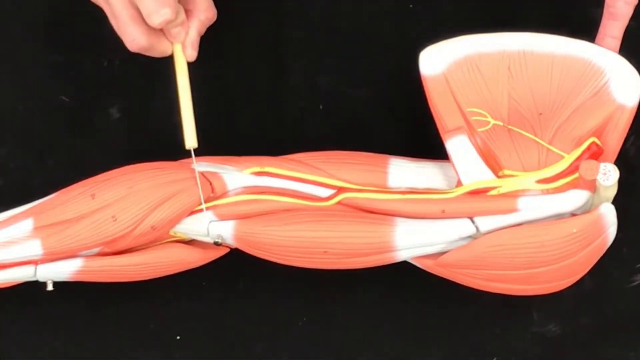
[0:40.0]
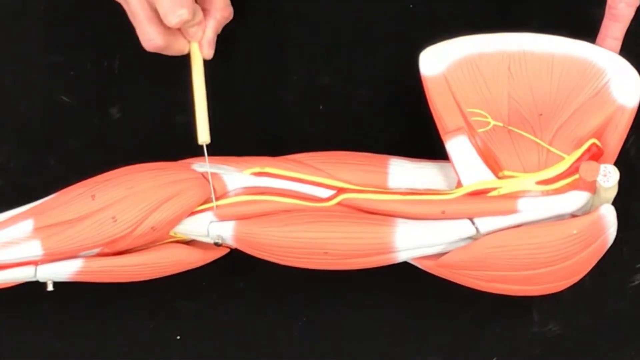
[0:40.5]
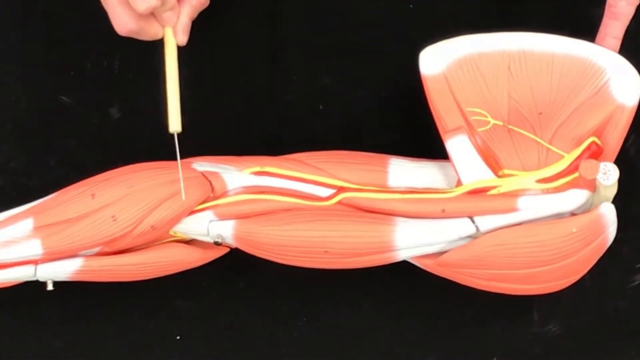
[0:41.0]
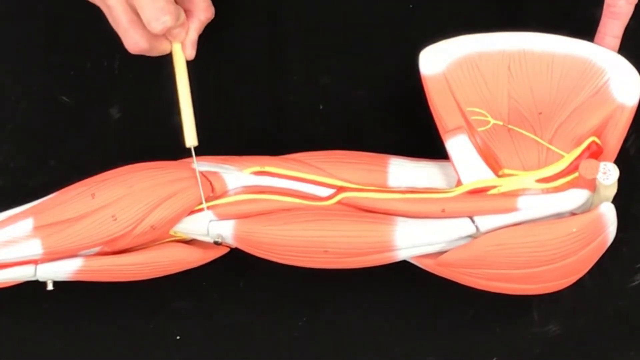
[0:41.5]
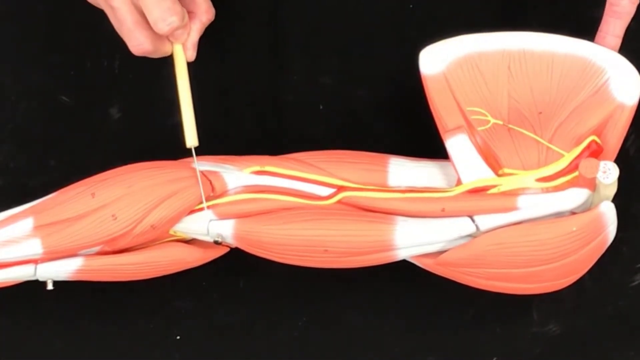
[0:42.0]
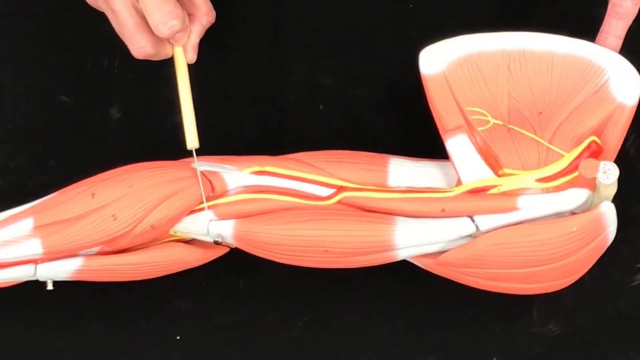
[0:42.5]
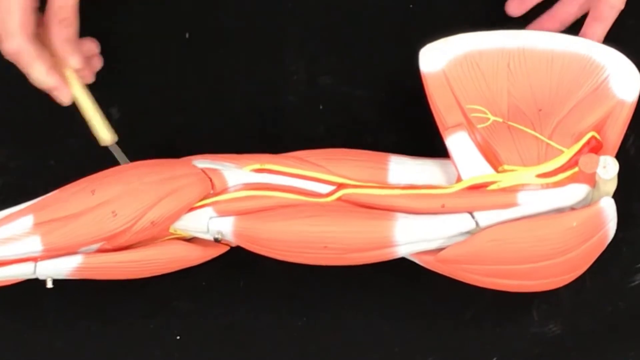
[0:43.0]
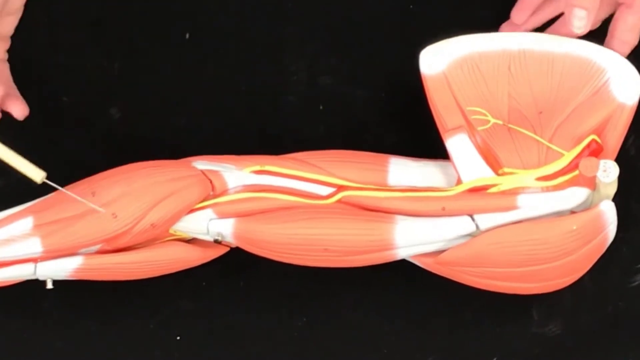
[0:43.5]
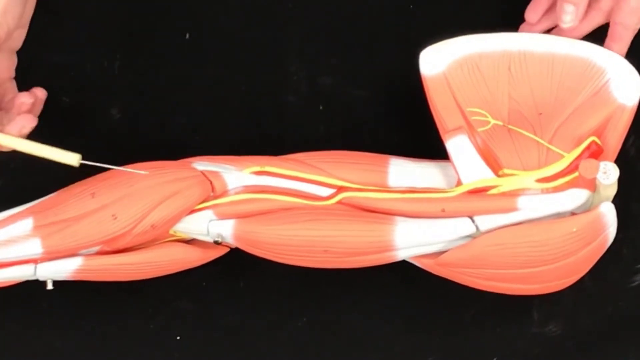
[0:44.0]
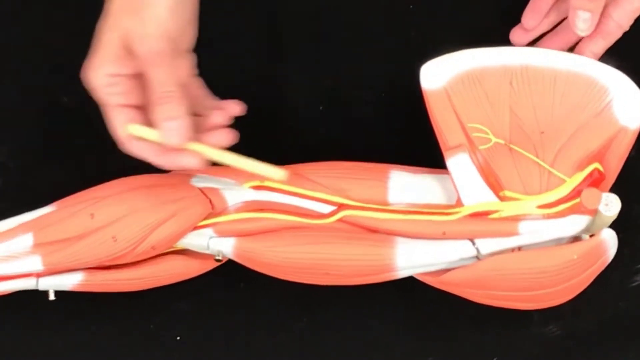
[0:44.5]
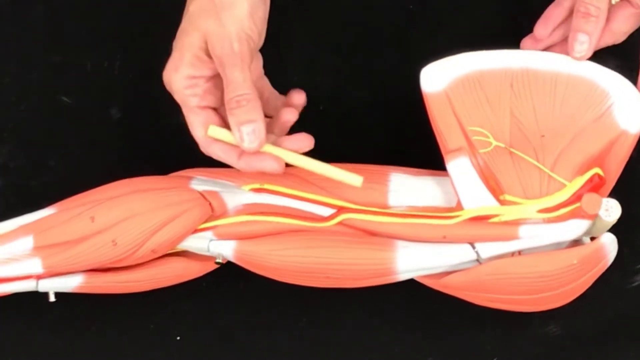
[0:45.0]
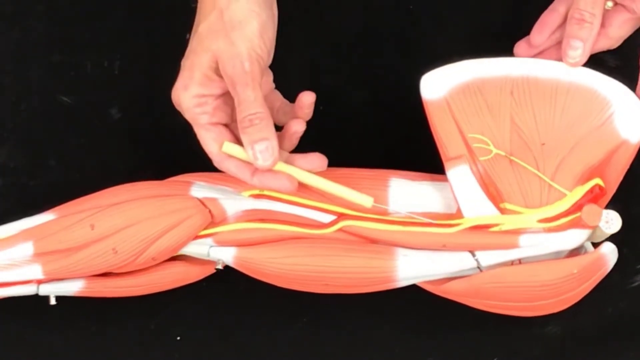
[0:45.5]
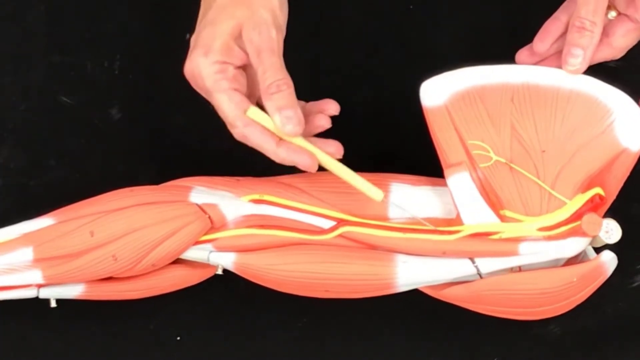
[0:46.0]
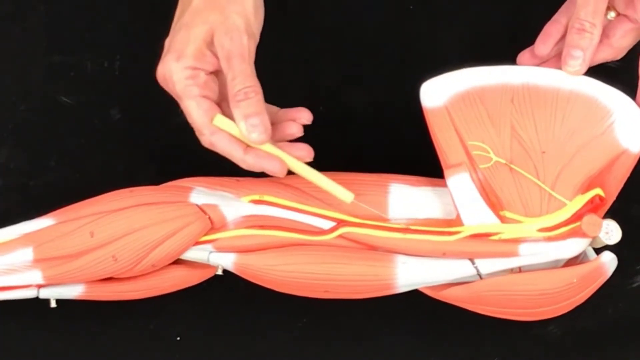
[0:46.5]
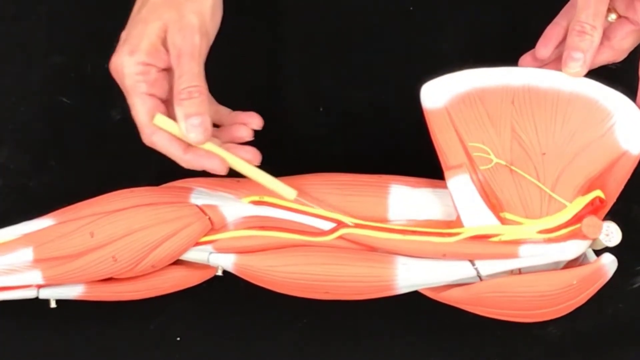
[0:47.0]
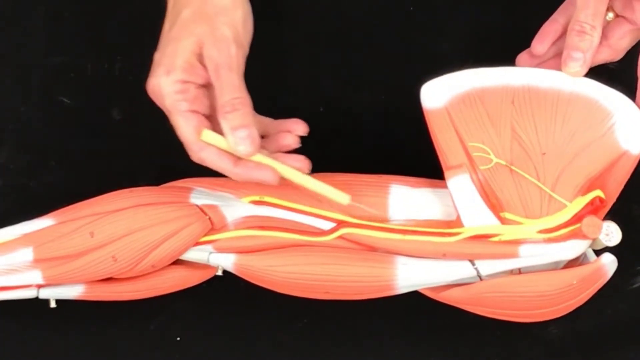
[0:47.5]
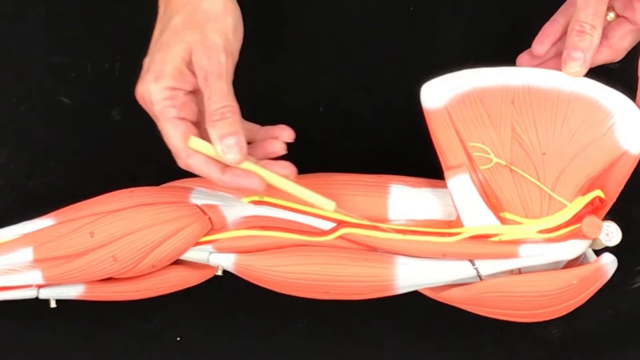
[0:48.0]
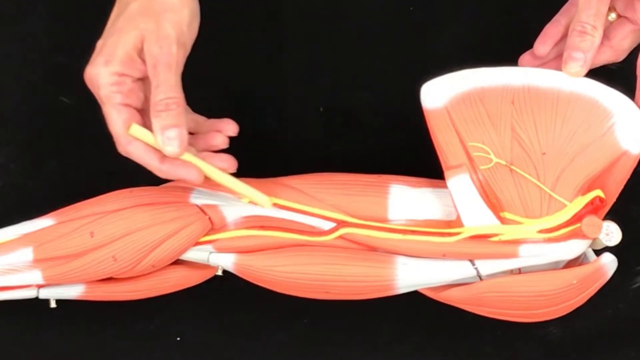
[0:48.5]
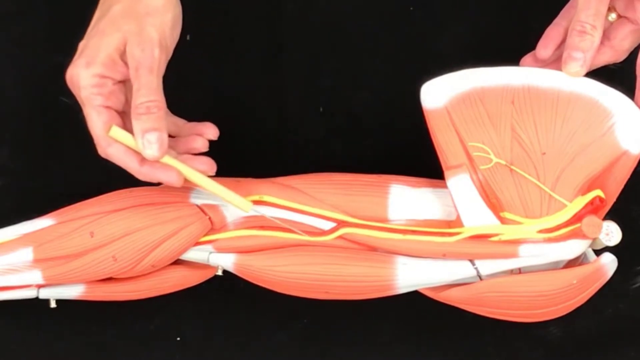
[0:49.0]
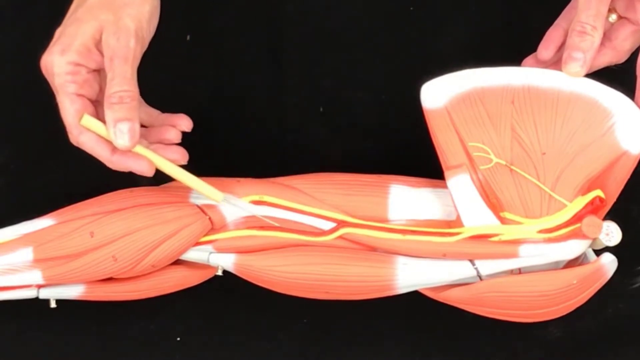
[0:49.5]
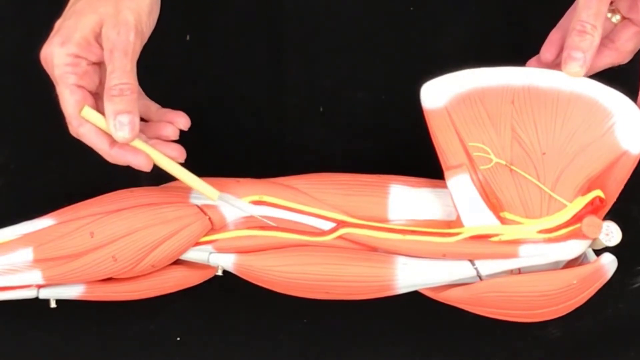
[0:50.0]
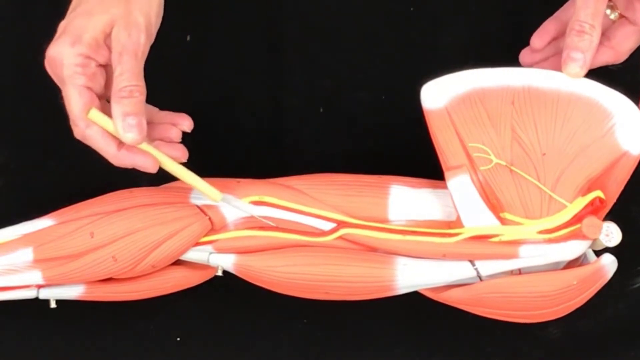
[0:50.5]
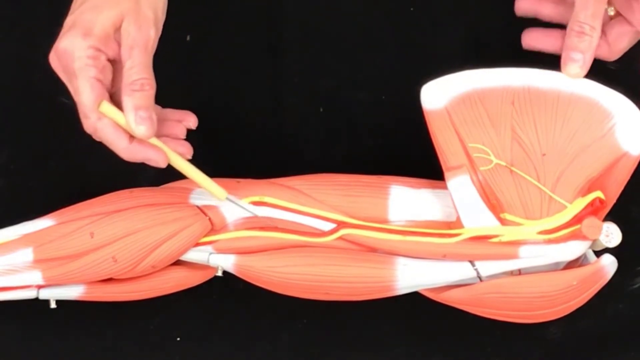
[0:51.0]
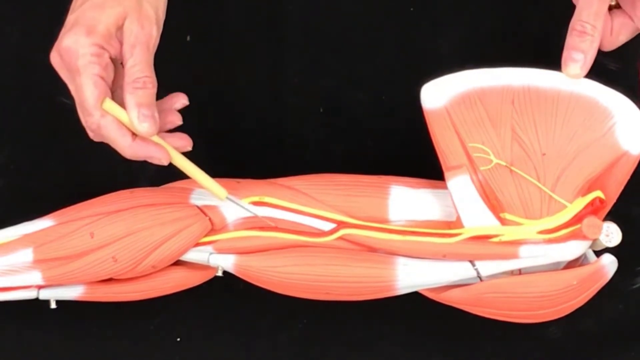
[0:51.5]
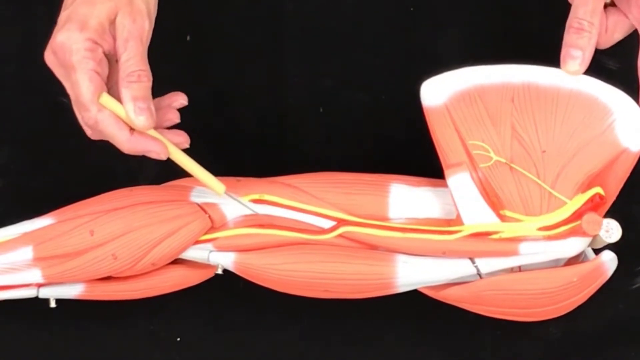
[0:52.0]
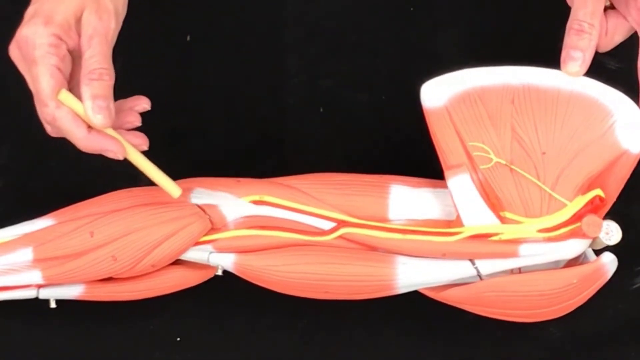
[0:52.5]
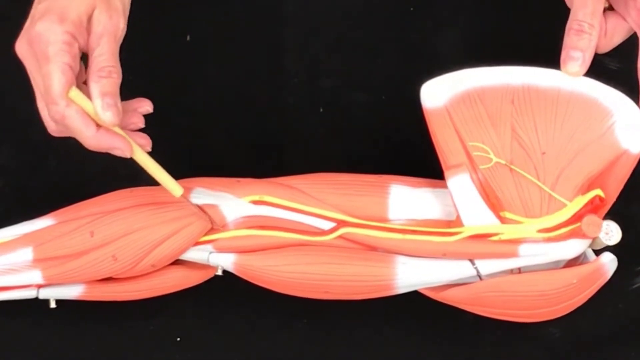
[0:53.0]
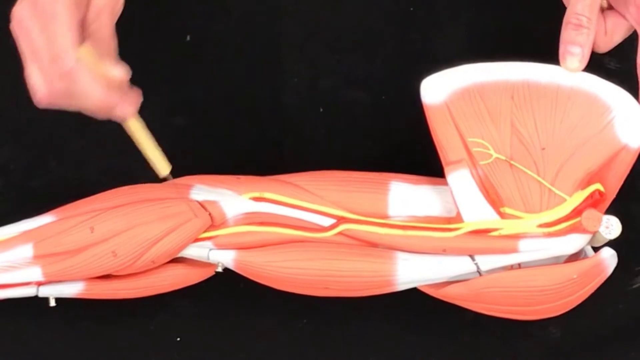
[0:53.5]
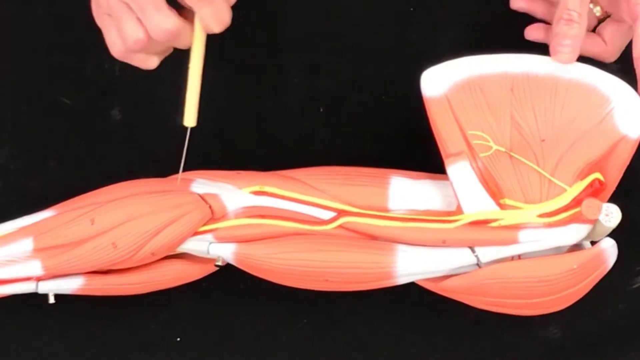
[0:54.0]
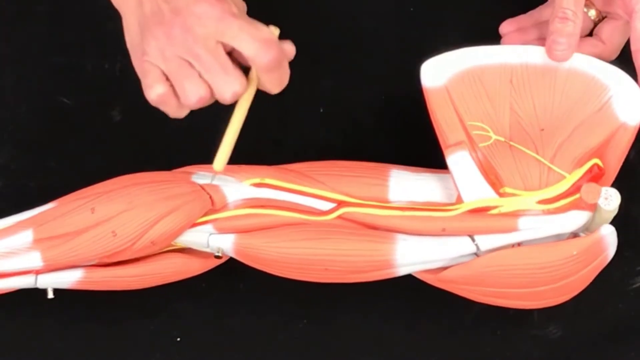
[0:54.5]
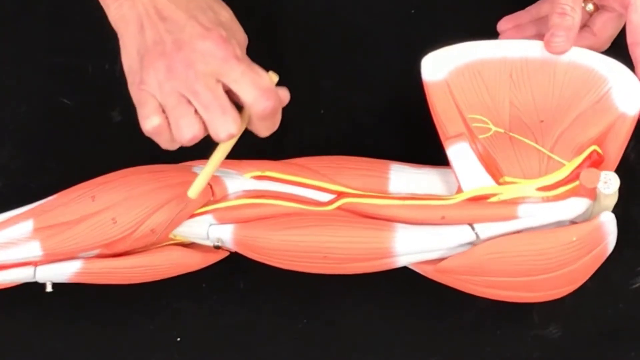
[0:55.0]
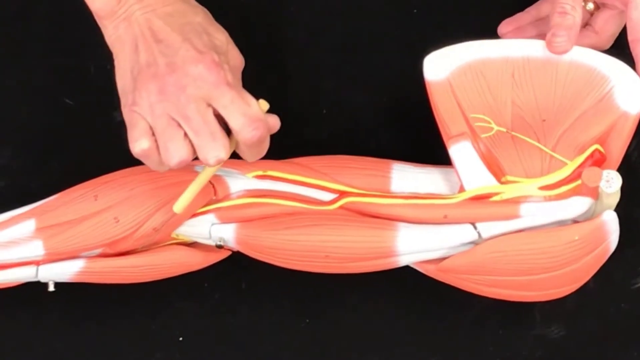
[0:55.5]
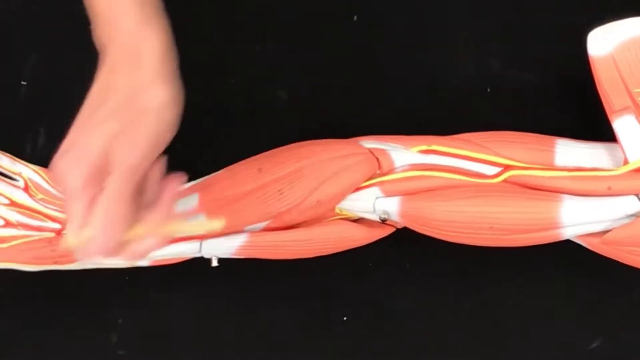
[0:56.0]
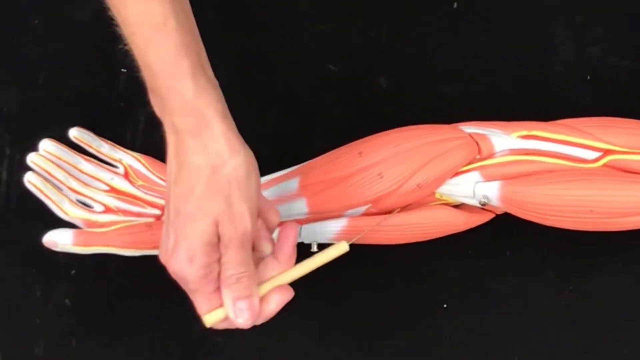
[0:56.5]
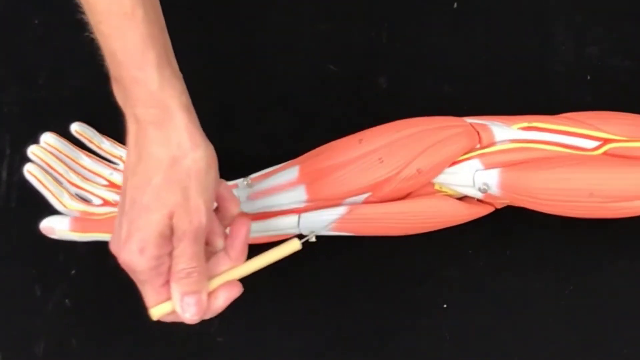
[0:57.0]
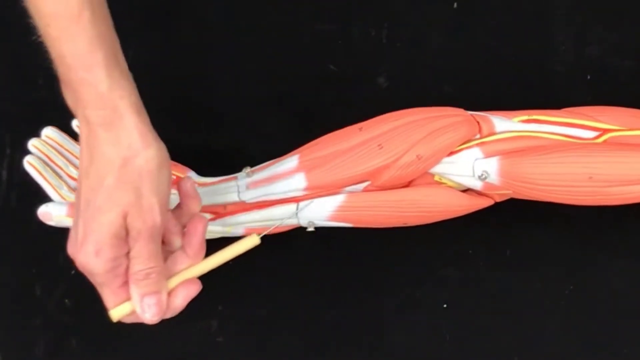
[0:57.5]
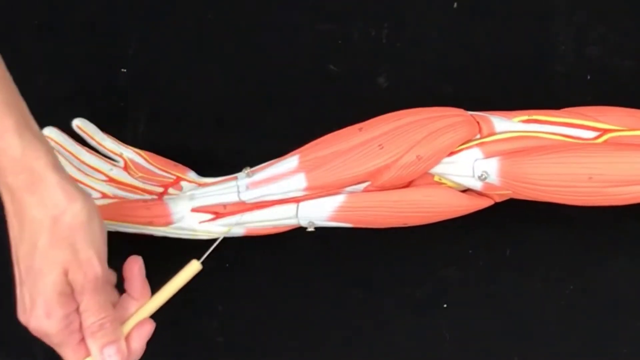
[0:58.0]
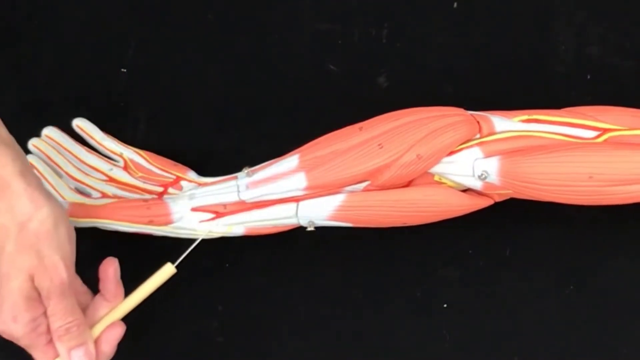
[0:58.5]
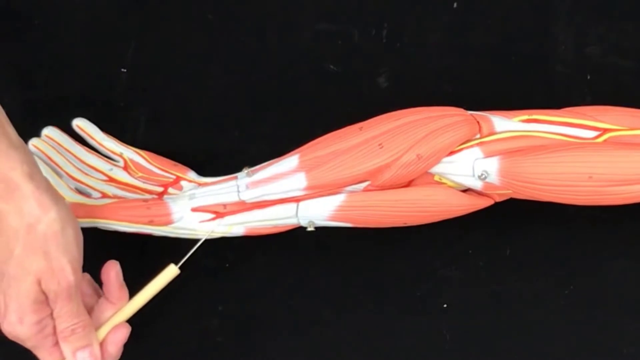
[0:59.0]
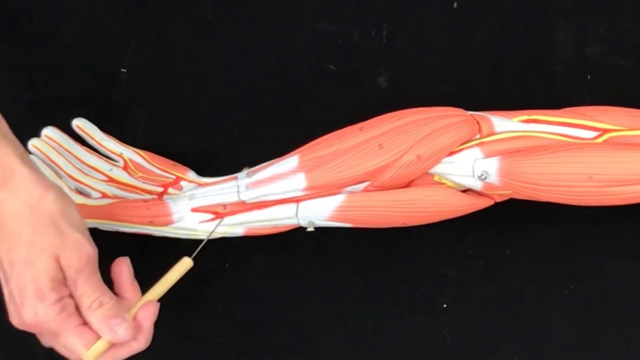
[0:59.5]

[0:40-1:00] She keeps the pointer on the inside of the elbow and shows how a ligament or tendon runs down between the muscle masses of the lower arm. She then moves the pointer back up almost to underneath the shoulder blade, where the armpit is, and follows a line of large vein or artery downward, showing how, like the inner elbow ligament, it runs between the top and bottom muscle masses of the lower arm down to the wrist. The parts of the model that represent arteries or veins are yellow, unlike the pink muscles and the white ligaments and tendons, and this yellow appears on top of the model.